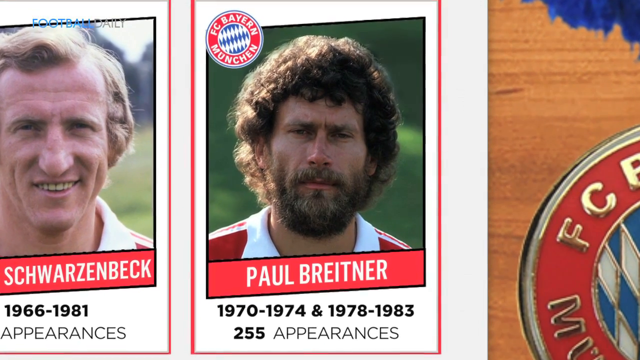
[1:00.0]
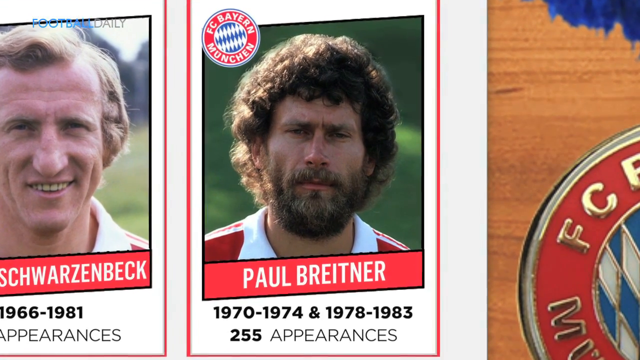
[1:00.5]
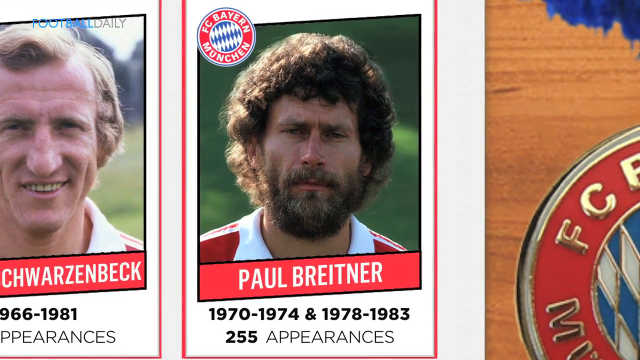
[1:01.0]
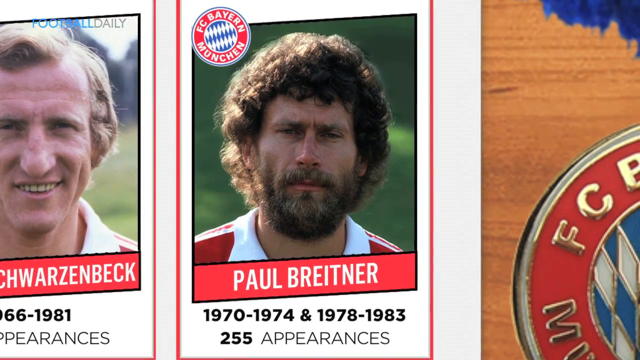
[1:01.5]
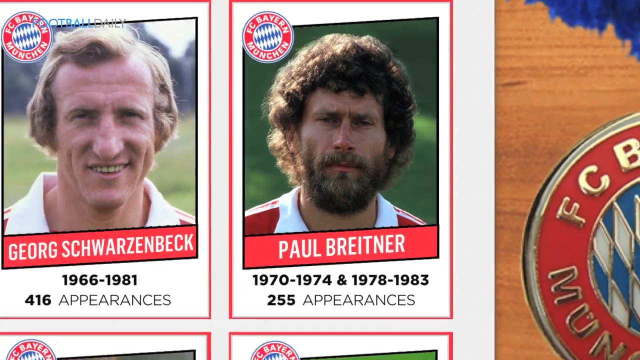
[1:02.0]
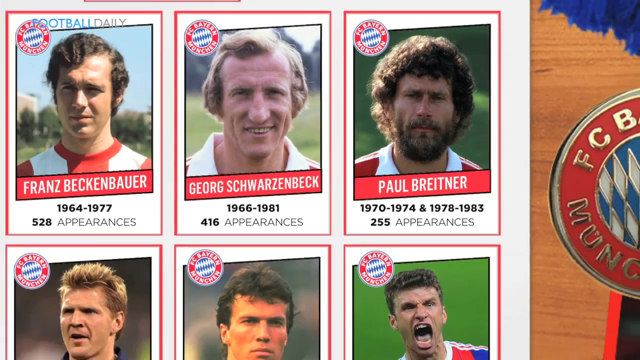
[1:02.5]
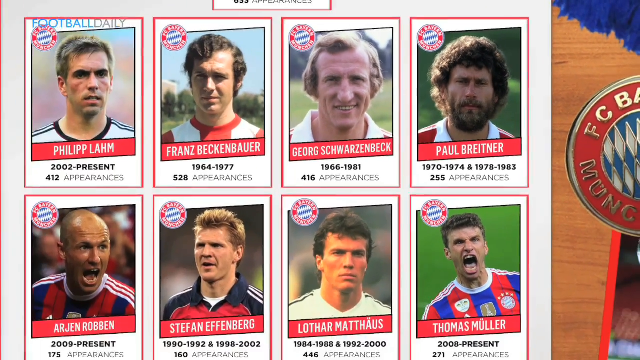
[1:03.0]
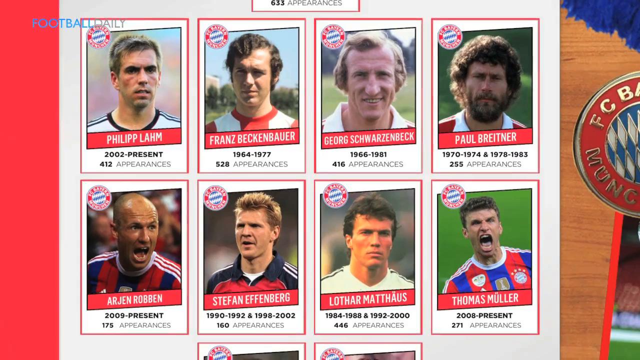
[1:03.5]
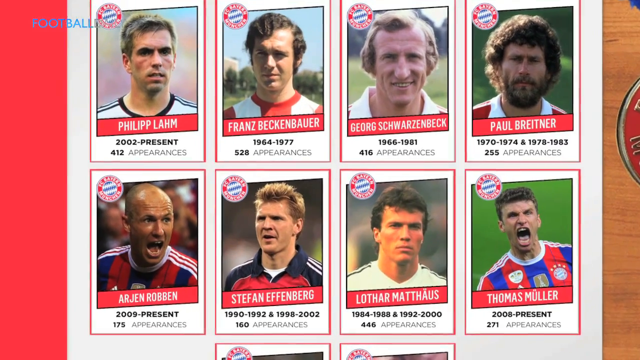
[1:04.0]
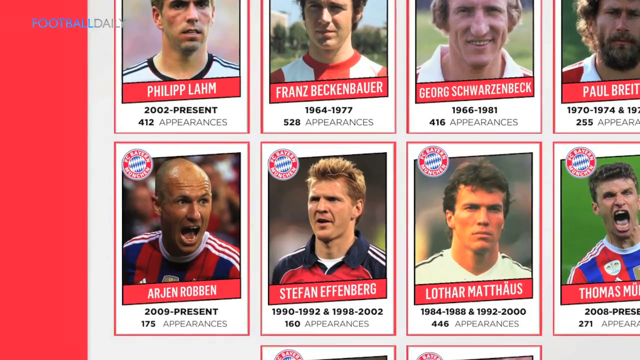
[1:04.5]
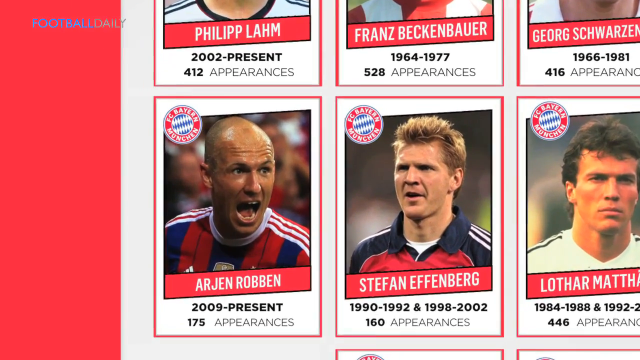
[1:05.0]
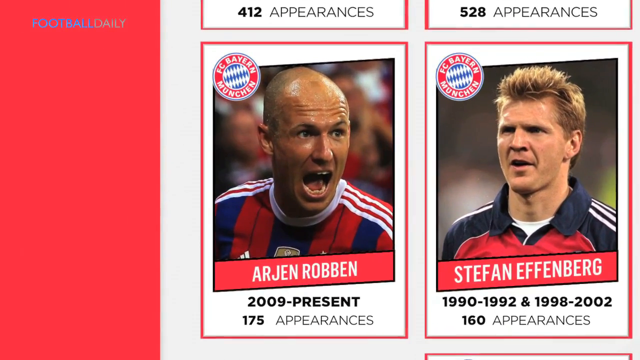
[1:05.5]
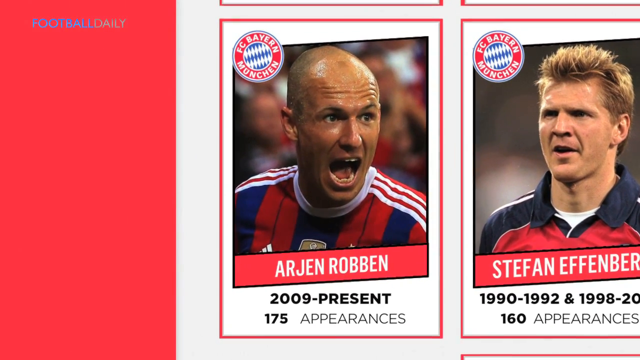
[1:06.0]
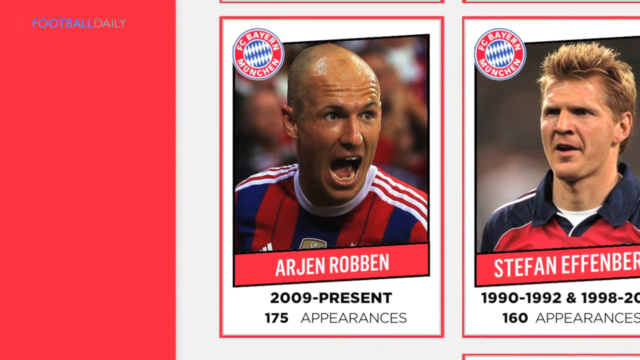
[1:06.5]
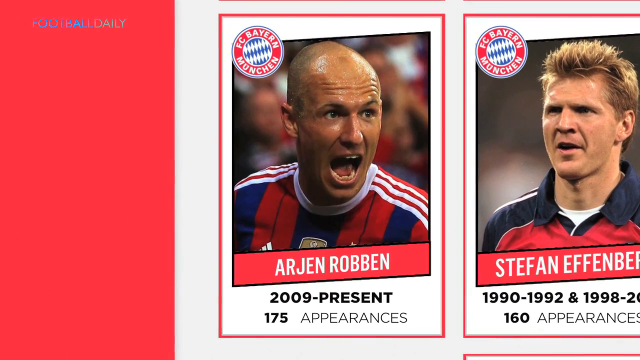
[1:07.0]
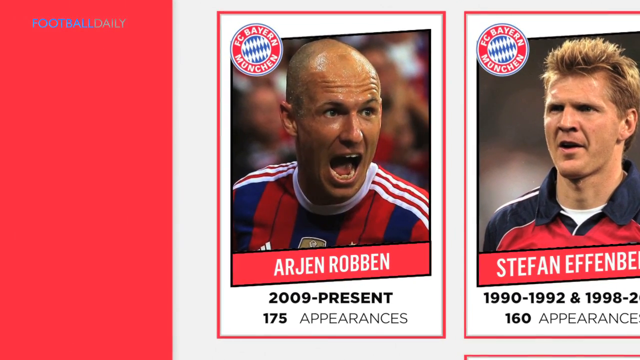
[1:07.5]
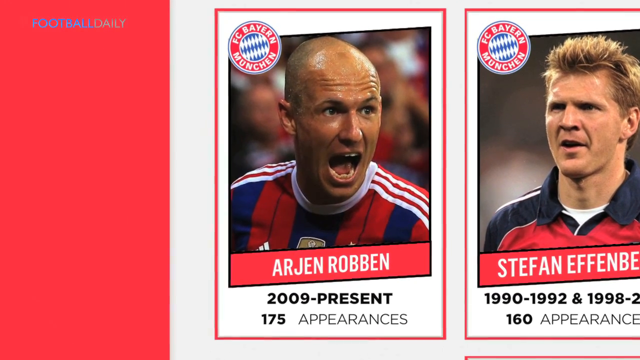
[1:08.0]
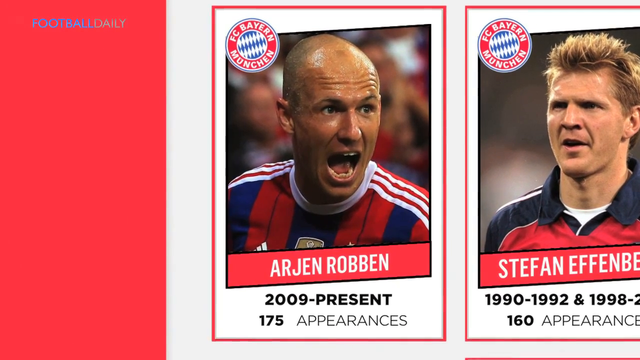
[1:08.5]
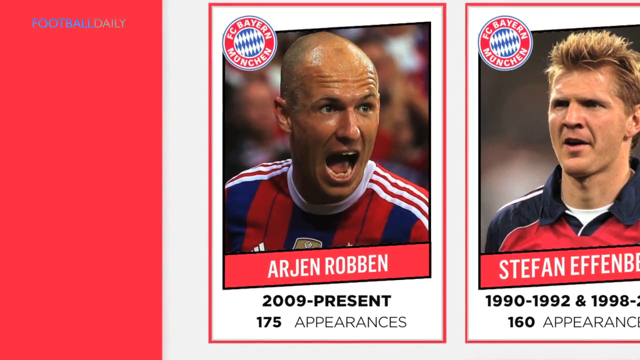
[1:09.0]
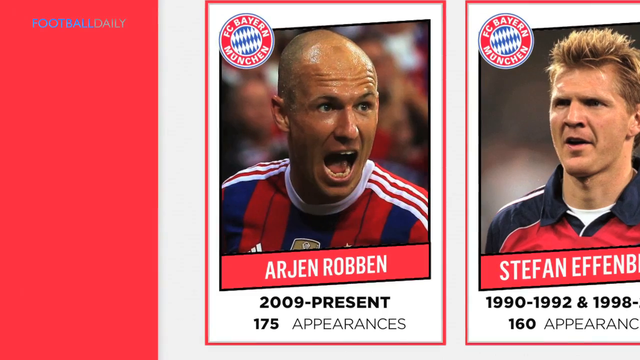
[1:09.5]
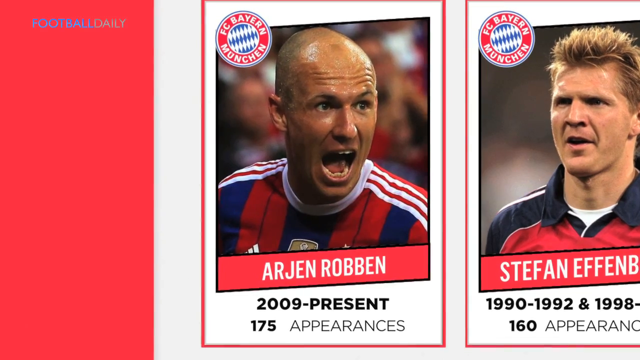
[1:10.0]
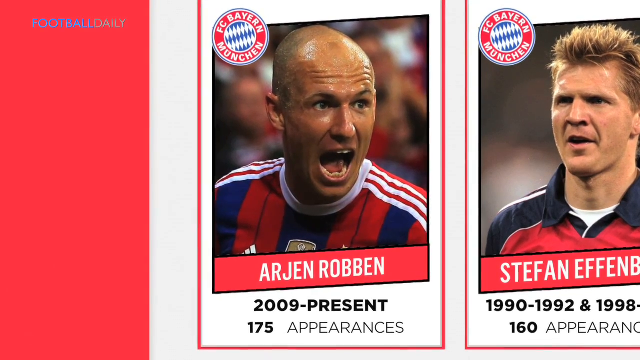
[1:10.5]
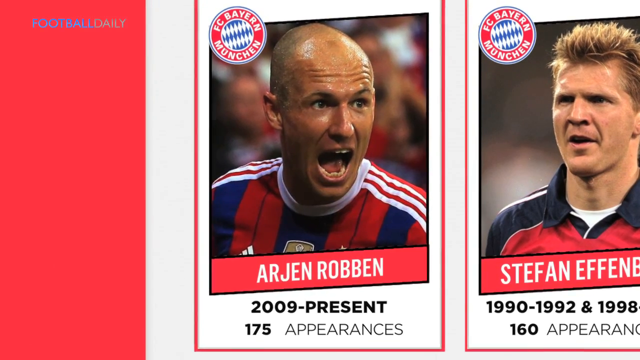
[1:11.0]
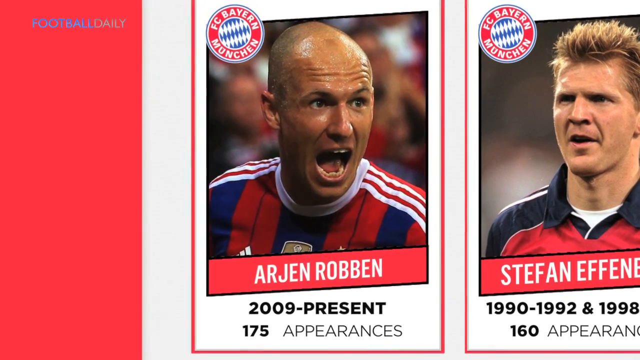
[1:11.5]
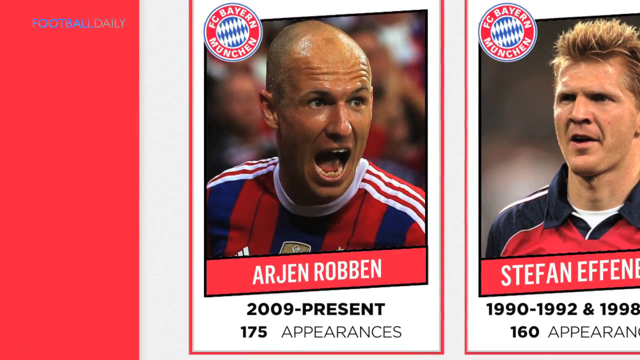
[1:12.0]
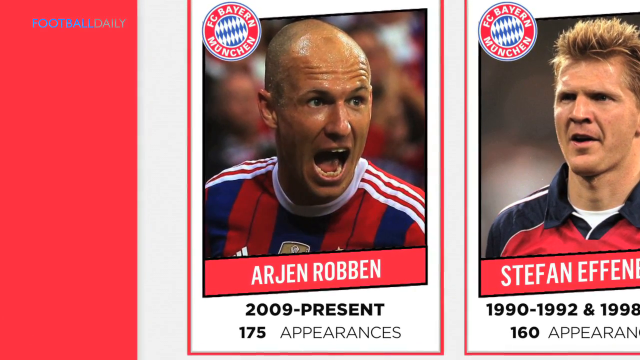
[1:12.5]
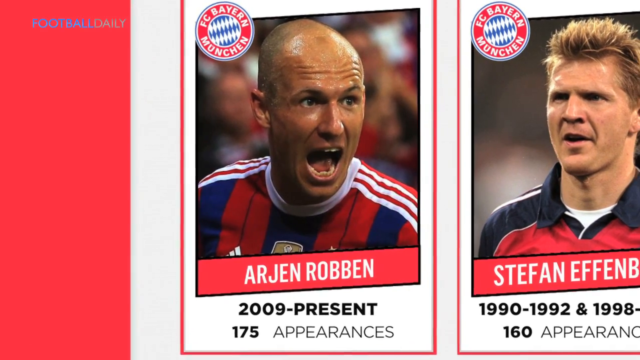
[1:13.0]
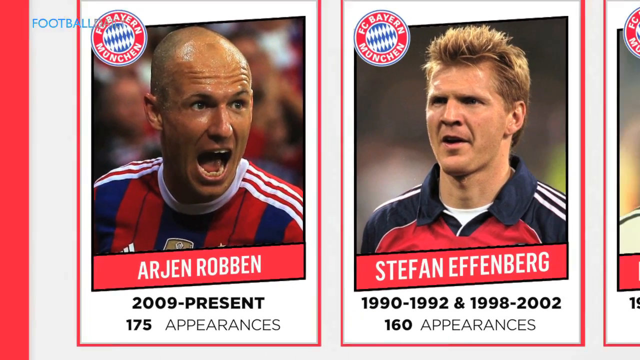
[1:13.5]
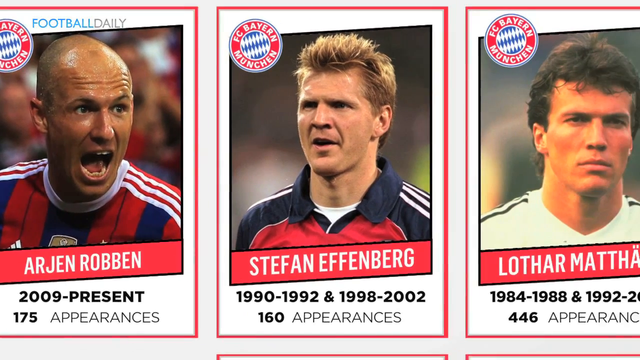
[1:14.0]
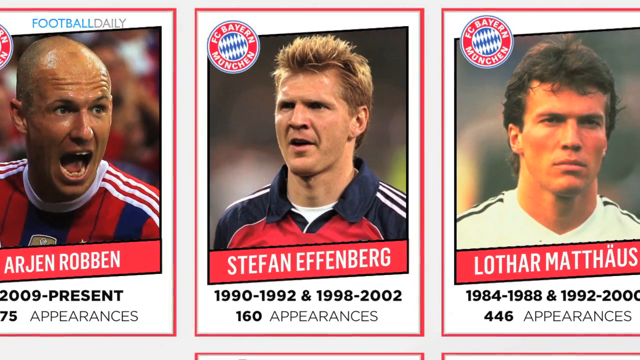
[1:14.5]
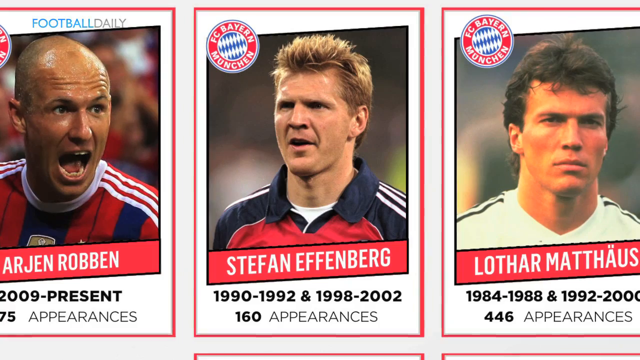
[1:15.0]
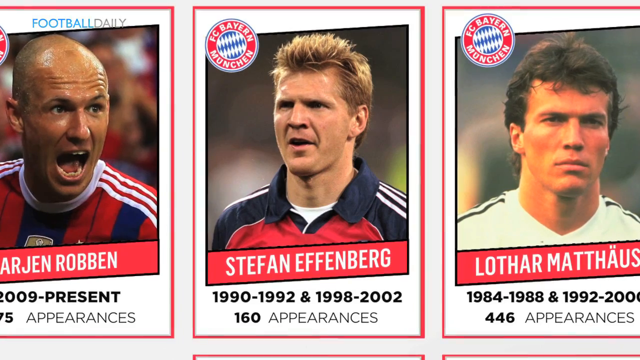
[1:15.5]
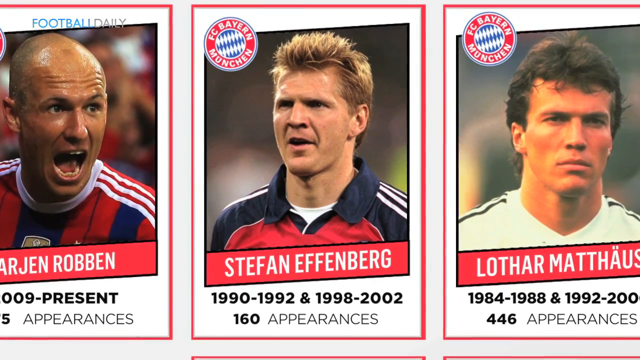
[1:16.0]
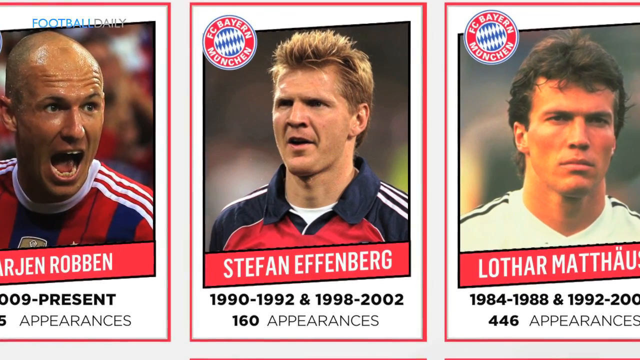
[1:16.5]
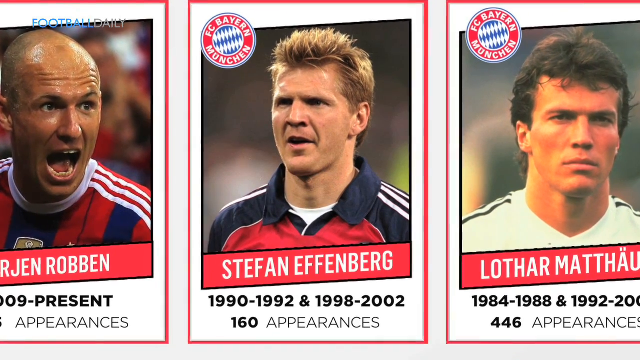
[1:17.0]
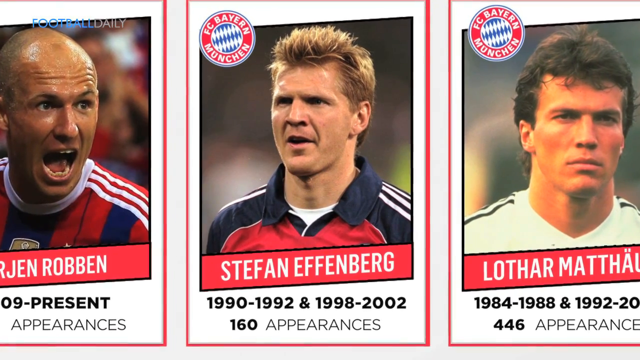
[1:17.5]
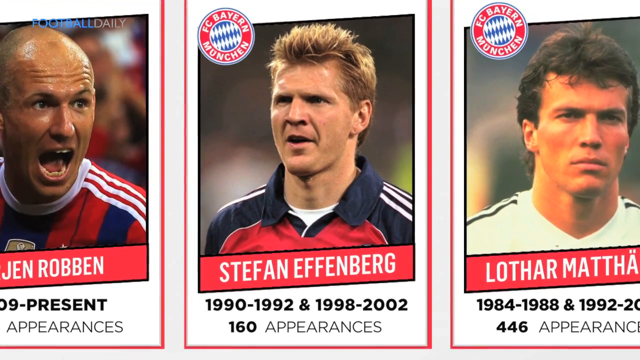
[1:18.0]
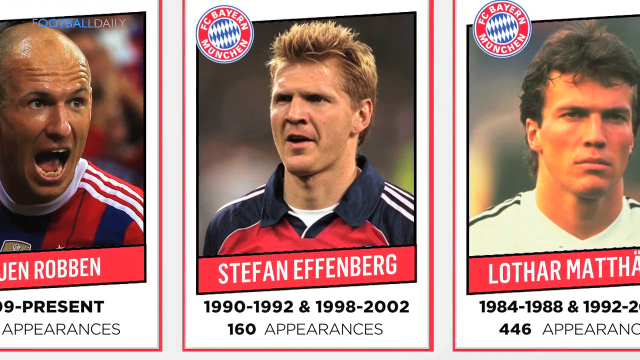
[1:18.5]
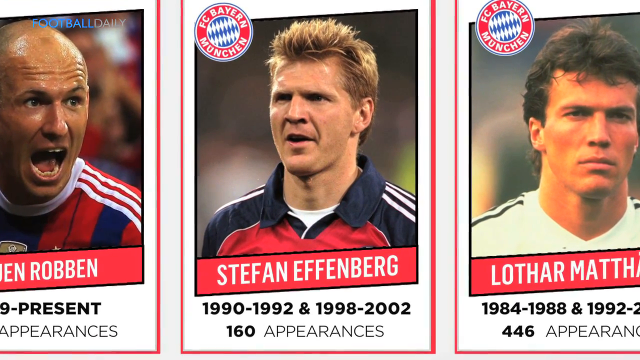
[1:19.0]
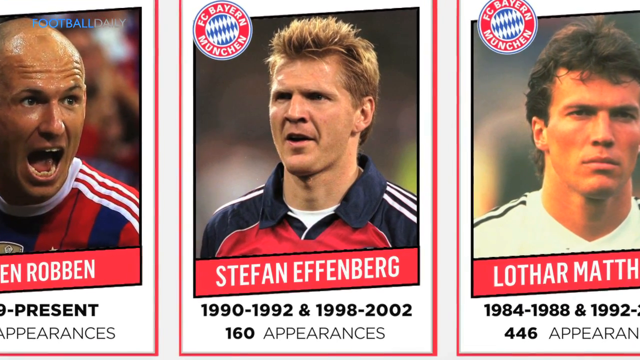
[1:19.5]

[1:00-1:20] Paul BREITNER is still on screen, with "1970-1974", an "&" symbol, "1978-1983" and "255 appearances". The view zooms in on him, pulls back, and moves to the first person in the second row, "ARJEN ROBPEN", "2009-present", "175 appearances". It zooms in on him and then moves to the next player, "STEFAN EFFENBERG", "1990-1992 & 1998-2002", "160 appearances".